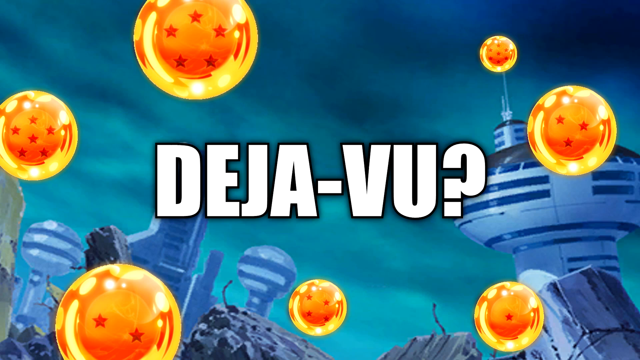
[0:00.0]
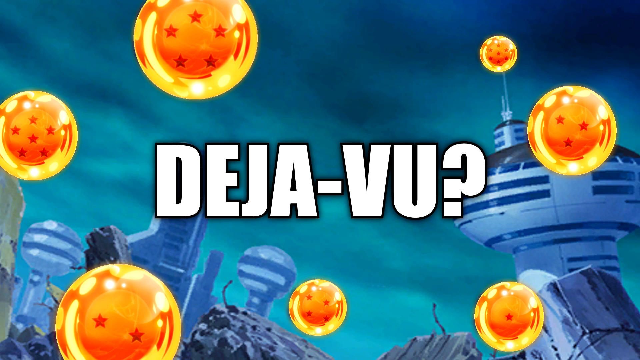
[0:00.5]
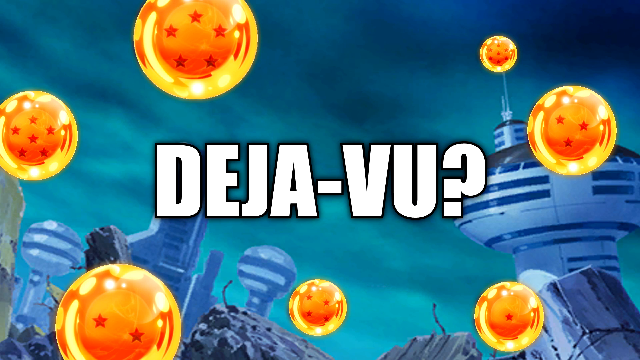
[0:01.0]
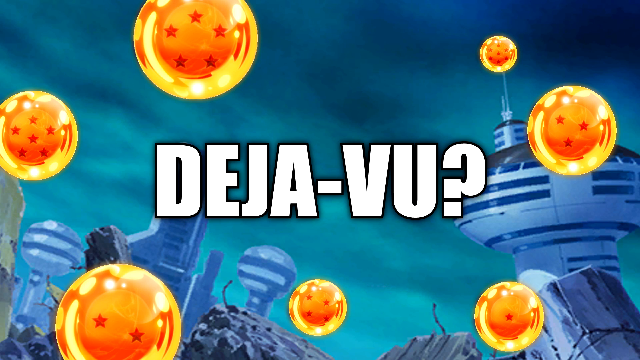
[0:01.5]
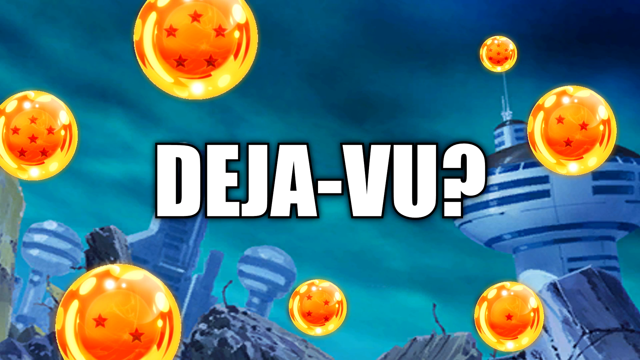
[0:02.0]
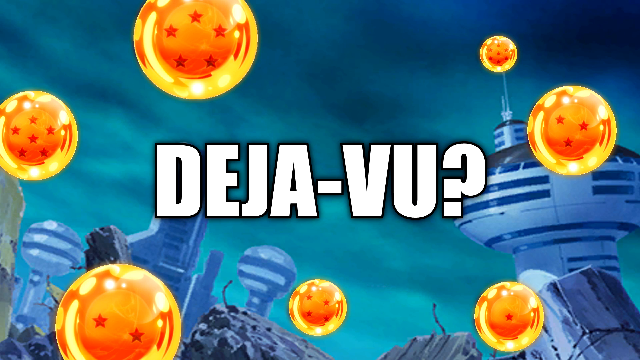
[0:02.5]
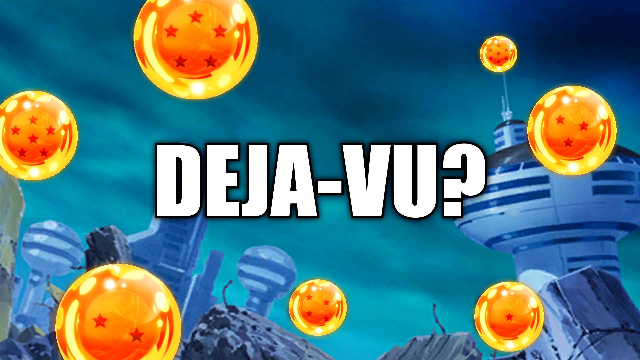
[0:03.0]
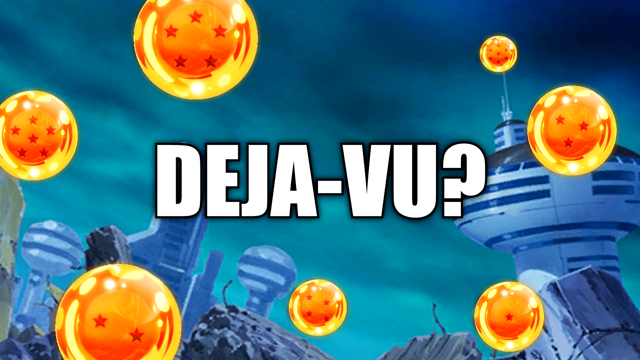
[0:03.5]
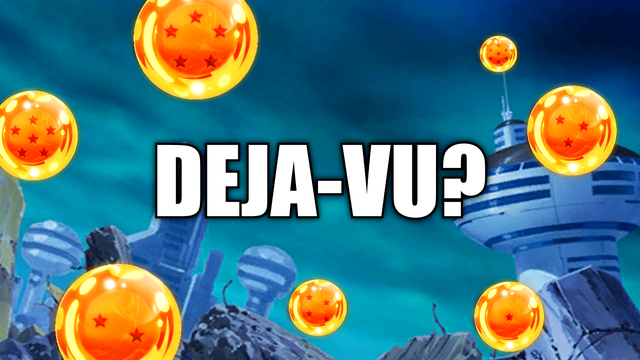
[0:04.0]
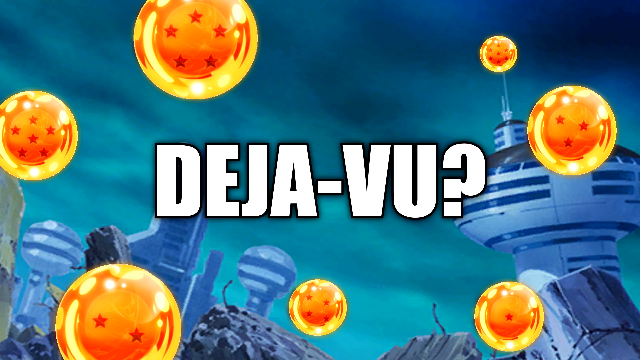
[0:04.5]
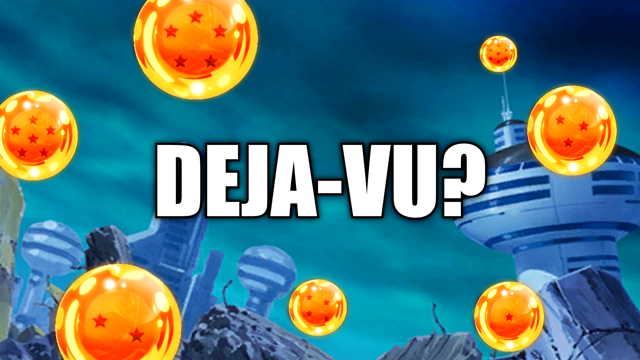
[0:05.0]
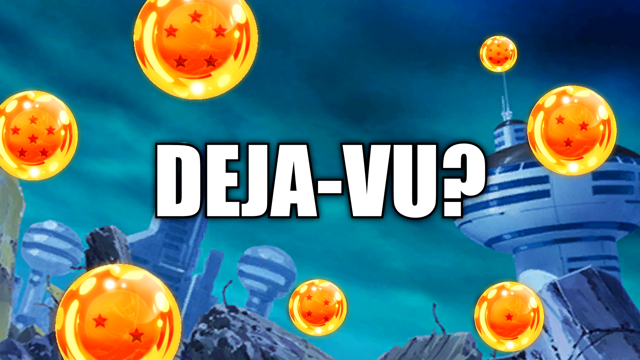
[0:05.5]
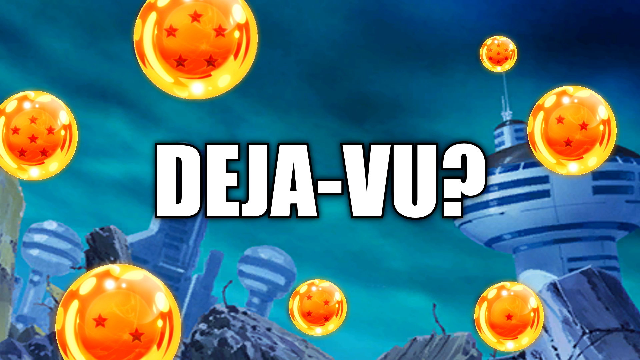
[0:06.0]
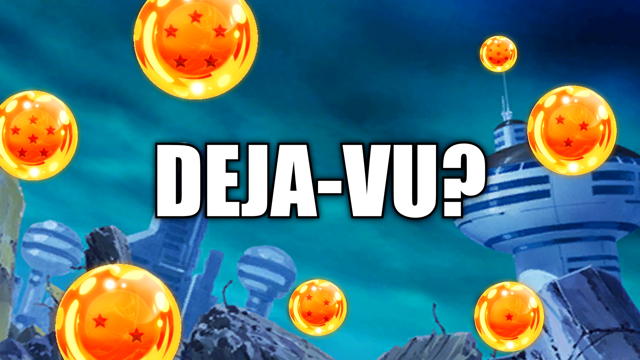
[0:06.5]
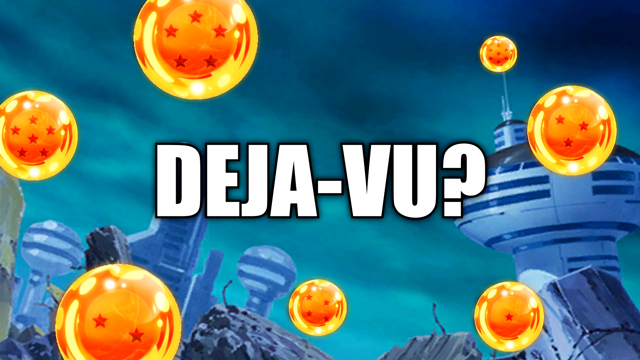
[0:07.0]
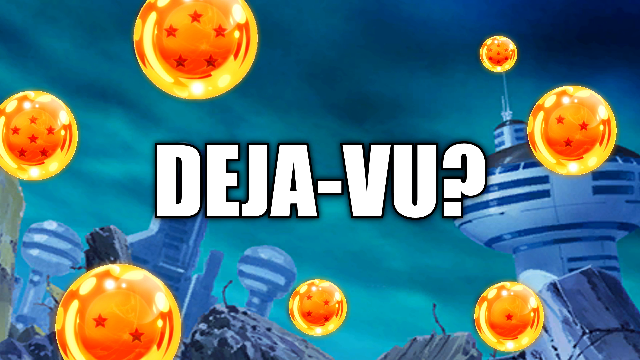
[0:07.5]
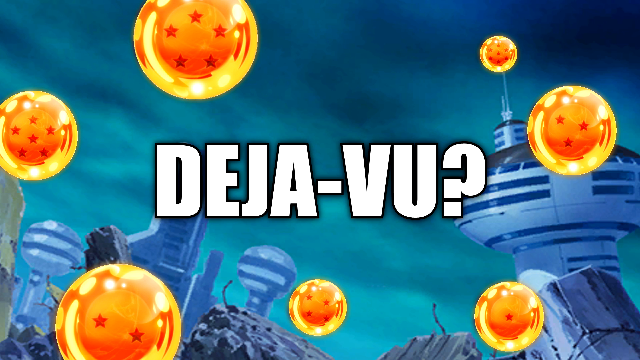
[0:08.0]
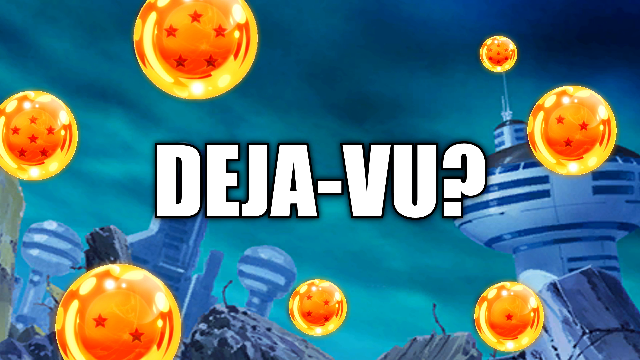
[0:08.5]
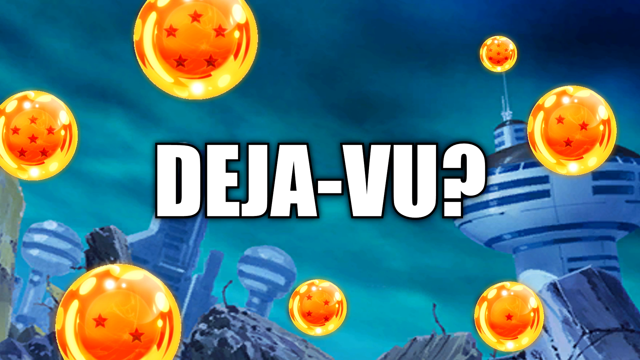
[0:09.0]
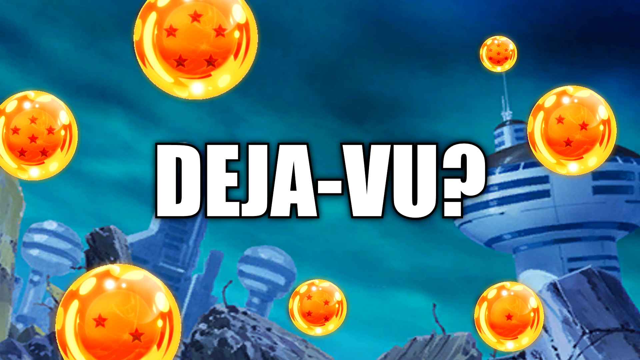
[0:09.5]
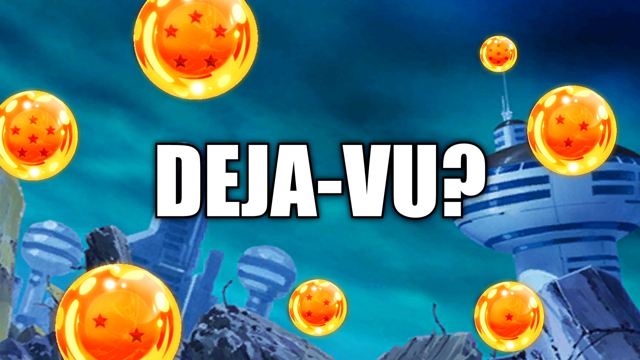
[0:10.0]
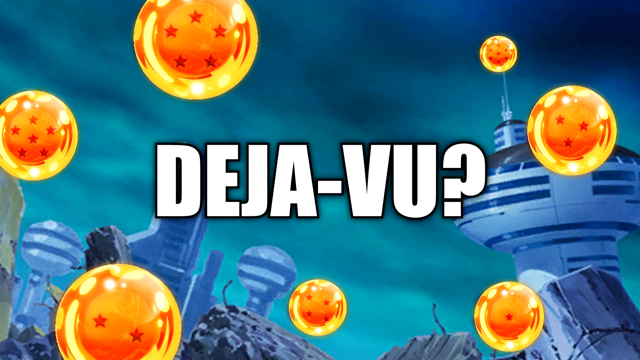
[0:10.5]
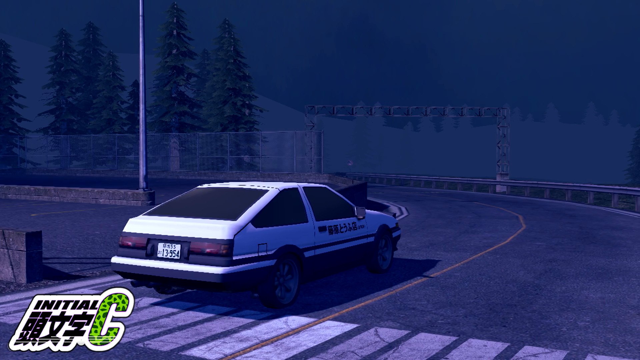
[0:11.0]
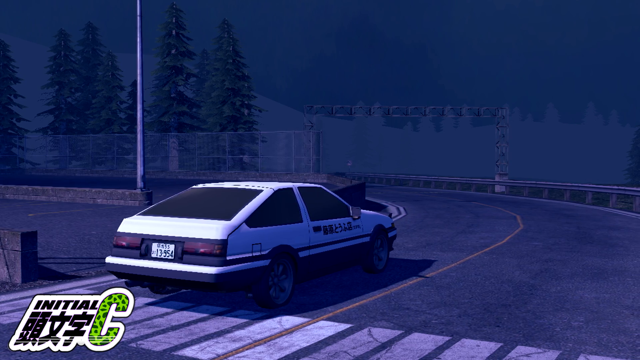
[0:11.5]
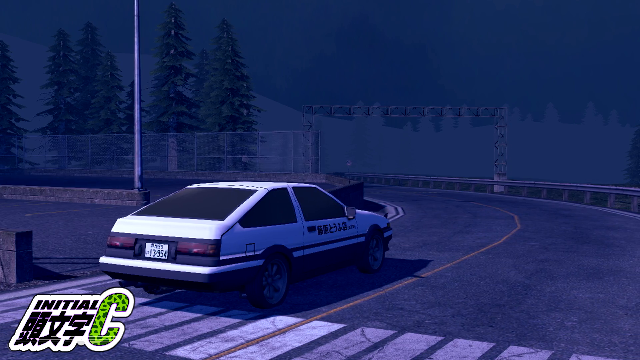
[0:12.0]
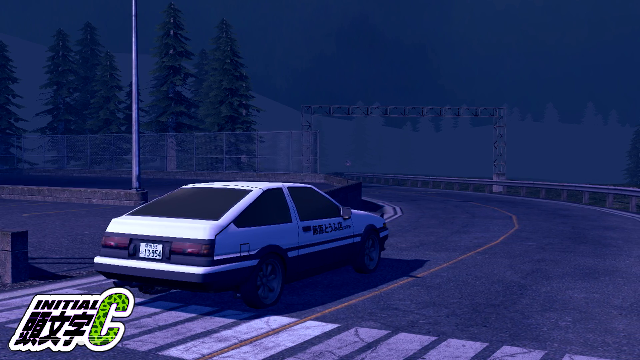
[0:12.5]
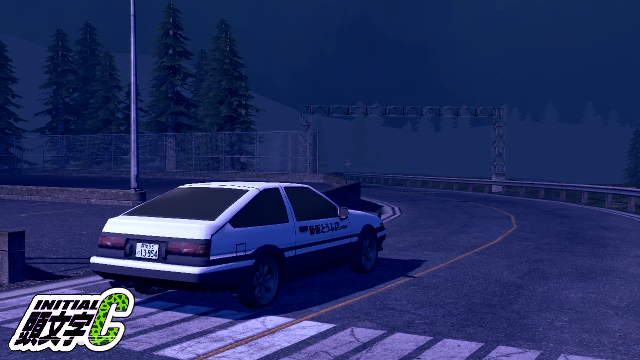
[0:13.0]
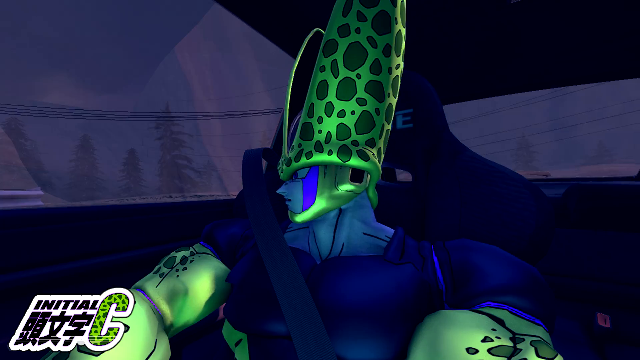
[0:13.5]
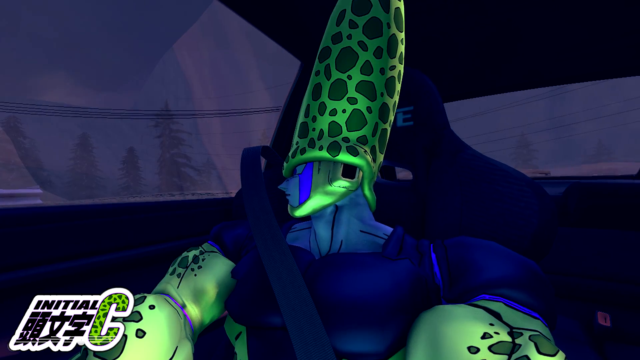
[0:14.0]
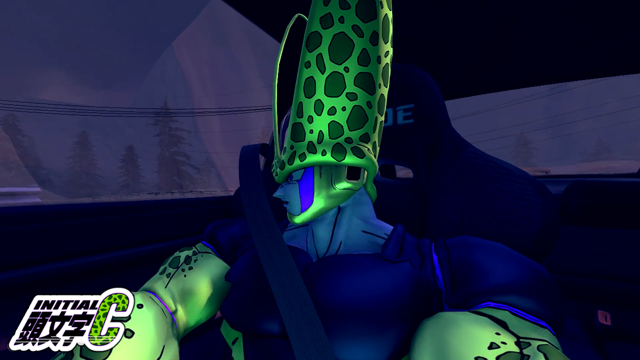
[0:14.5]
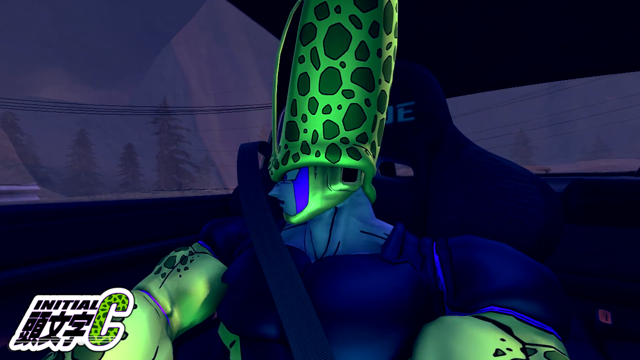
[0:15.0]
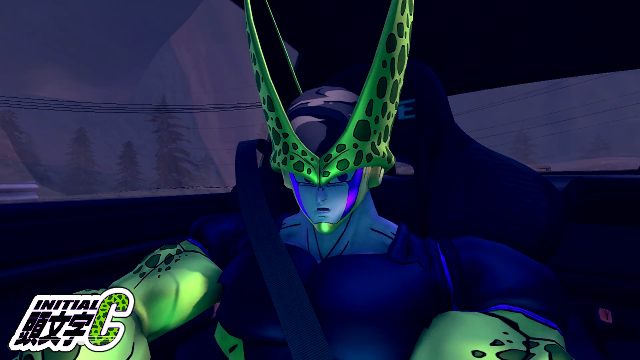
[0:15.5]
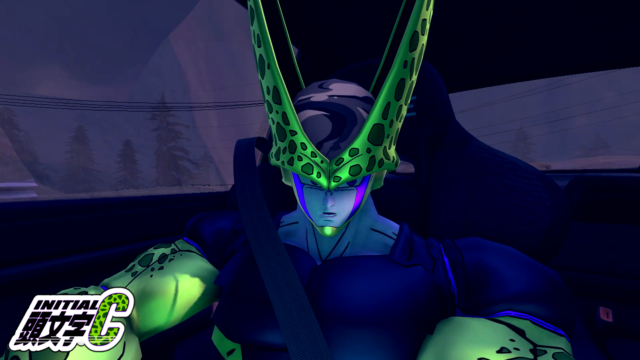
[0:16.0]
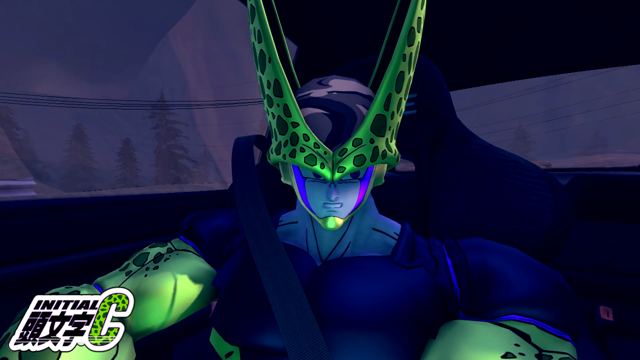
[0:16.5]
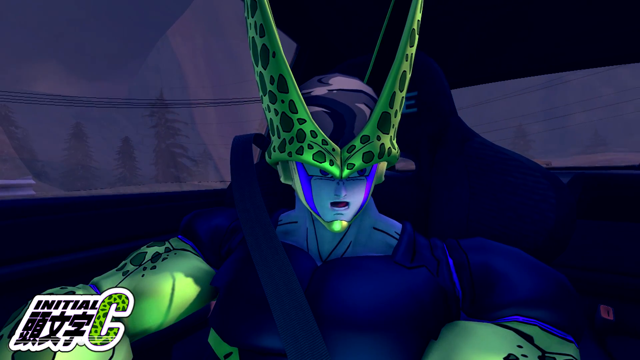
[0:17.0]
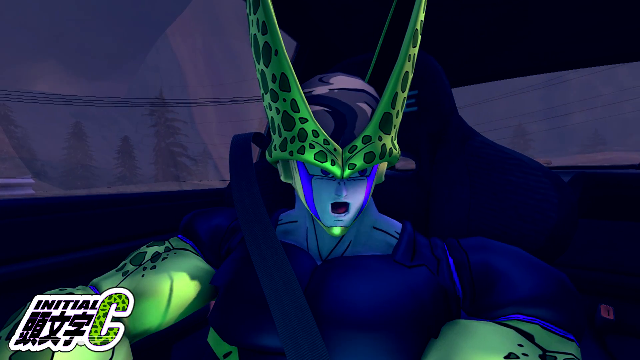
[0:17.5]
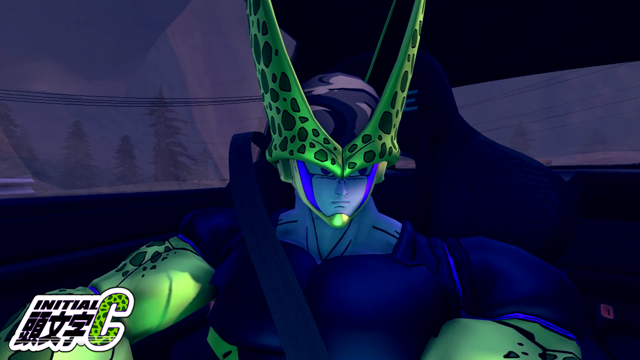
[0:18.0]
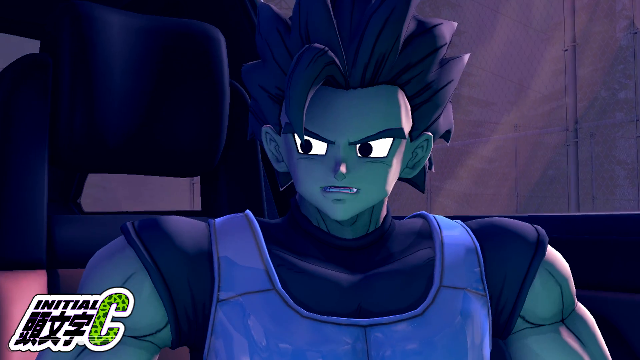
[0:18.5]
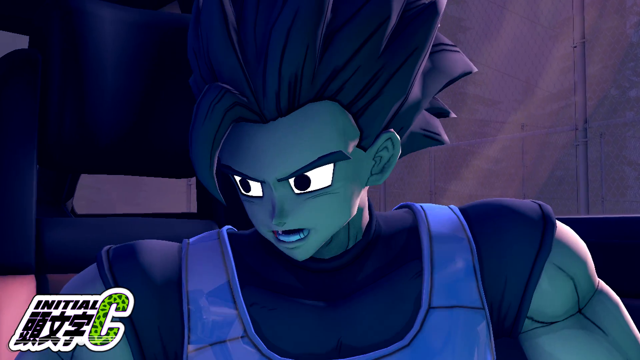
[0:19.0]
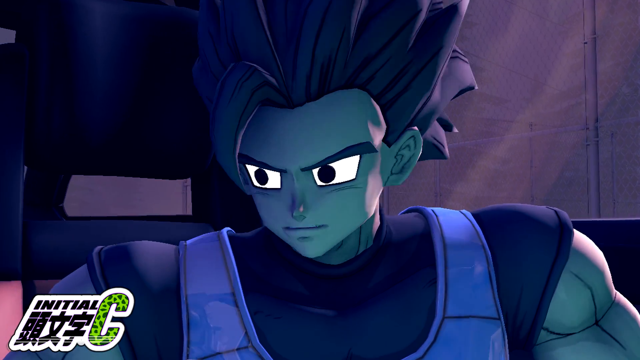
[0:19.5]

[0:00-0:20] The video opens on the Dragon Balls from Dragon Ball Z, with the text "Deja Vu" and a huge question mark. Next there is a car, and one Dragon Ball character keeps talking to another Dragon Ball character inside it; their lips move. One of them is possibly Vegeta, though he does not have the same hairstyle he has on the show. It may be a commercial for a video game or some sort of cheap knockoff of Dragon Ball Z. The graphics look like they came from a PlayStation or PlayStation 2.